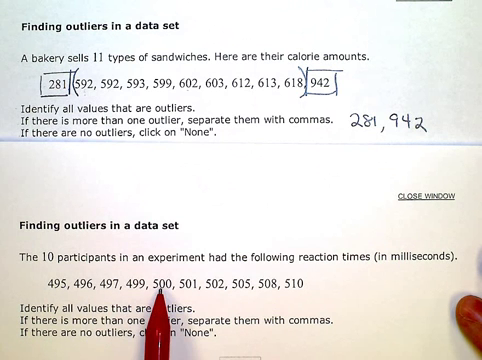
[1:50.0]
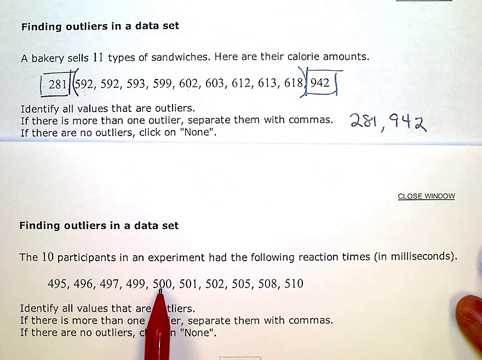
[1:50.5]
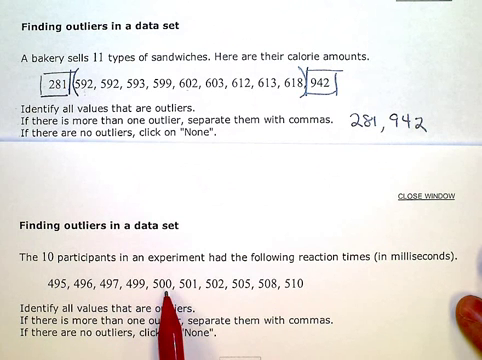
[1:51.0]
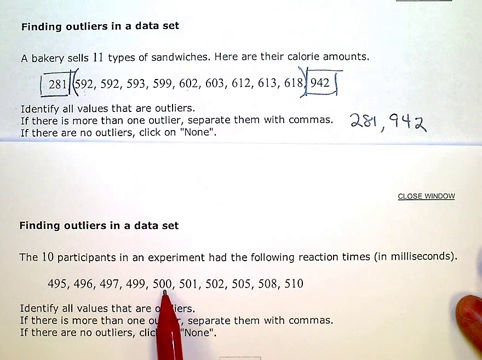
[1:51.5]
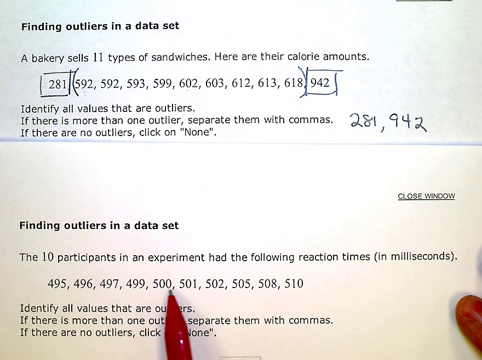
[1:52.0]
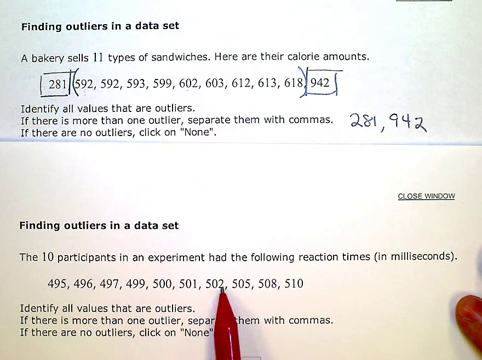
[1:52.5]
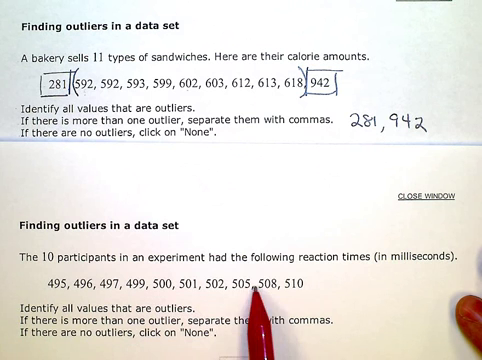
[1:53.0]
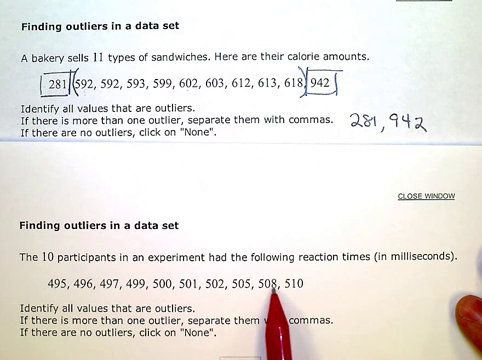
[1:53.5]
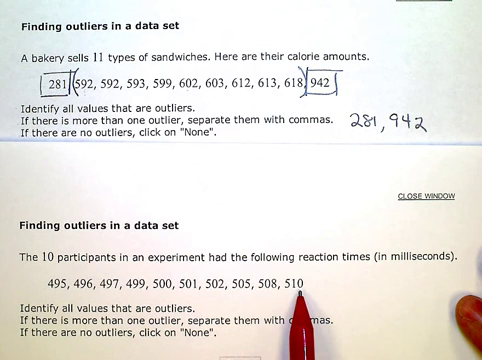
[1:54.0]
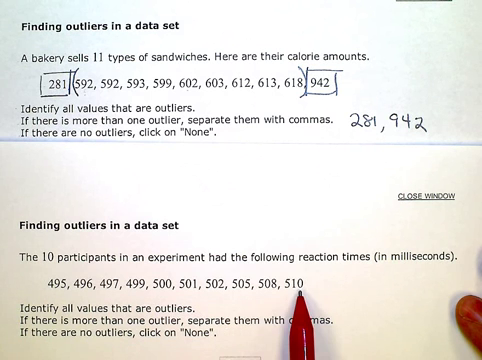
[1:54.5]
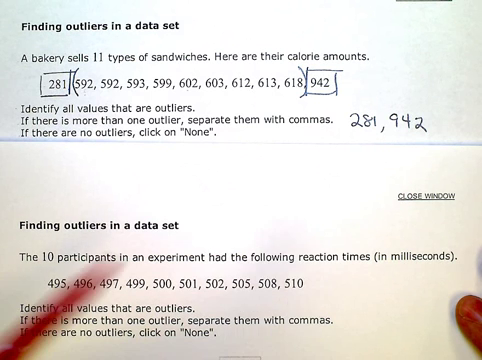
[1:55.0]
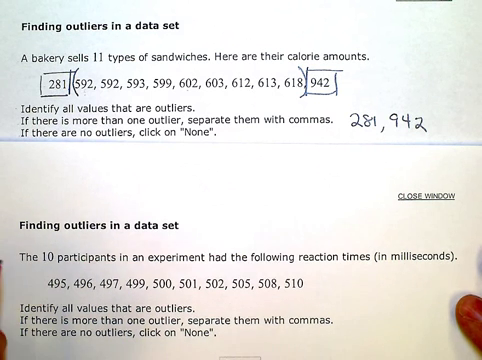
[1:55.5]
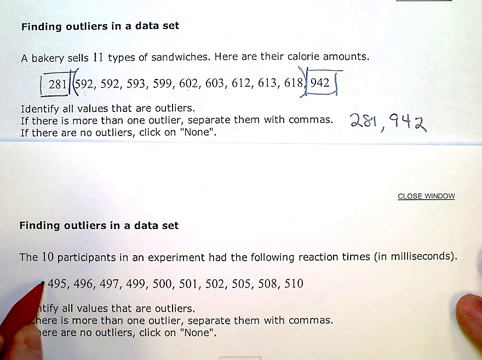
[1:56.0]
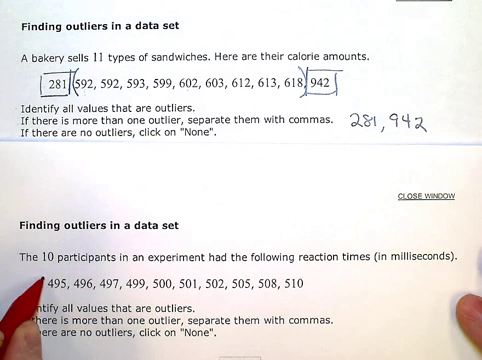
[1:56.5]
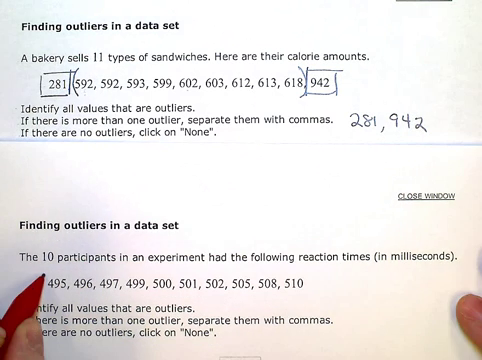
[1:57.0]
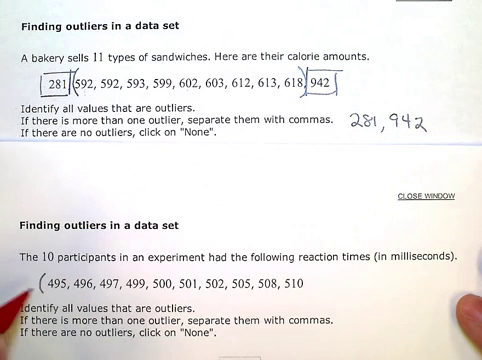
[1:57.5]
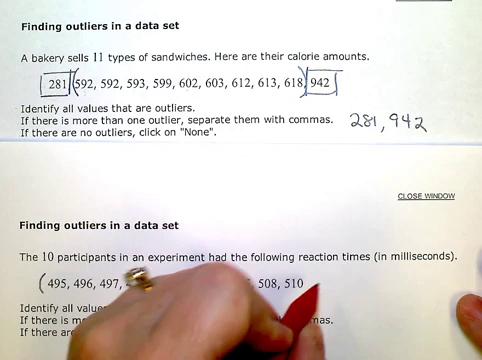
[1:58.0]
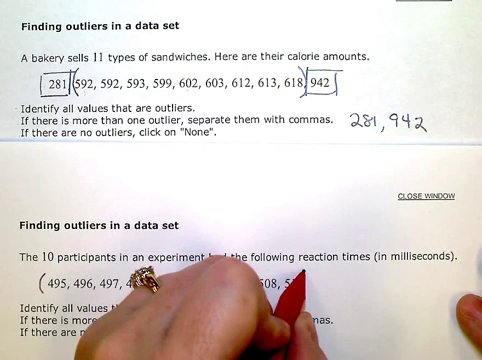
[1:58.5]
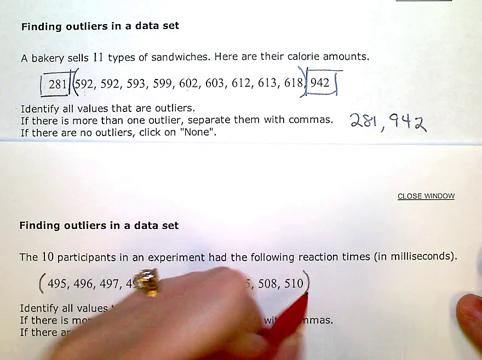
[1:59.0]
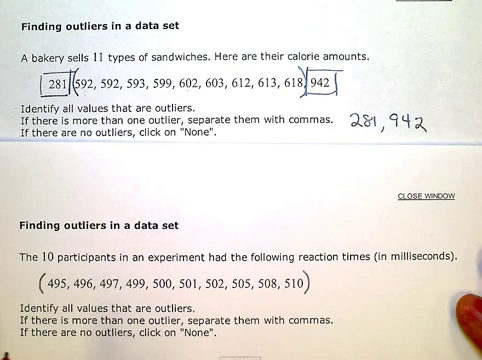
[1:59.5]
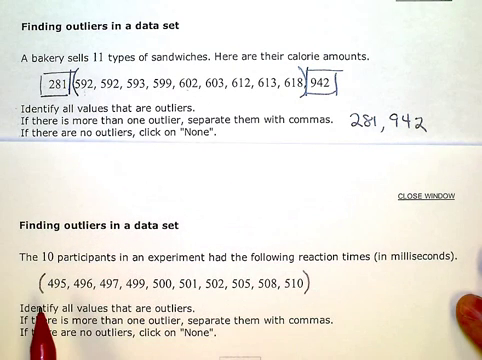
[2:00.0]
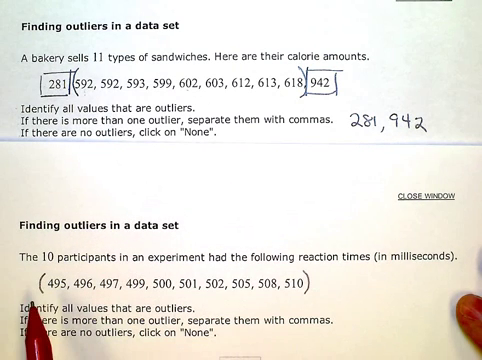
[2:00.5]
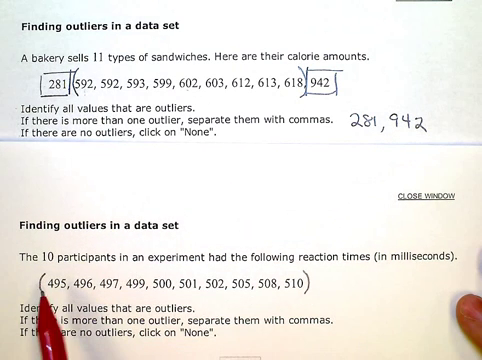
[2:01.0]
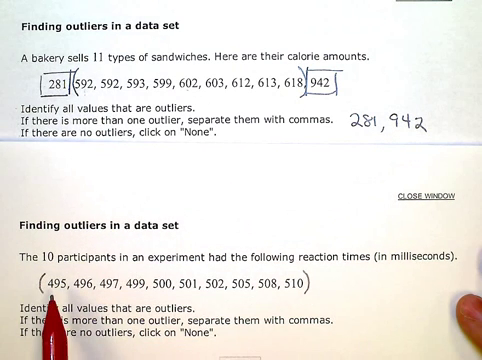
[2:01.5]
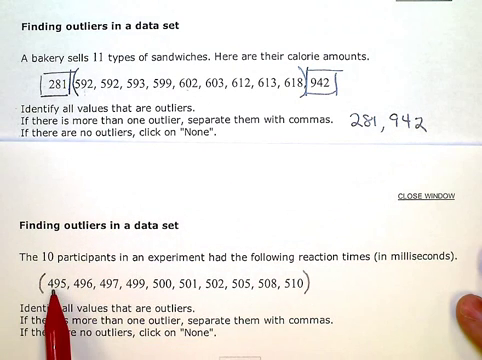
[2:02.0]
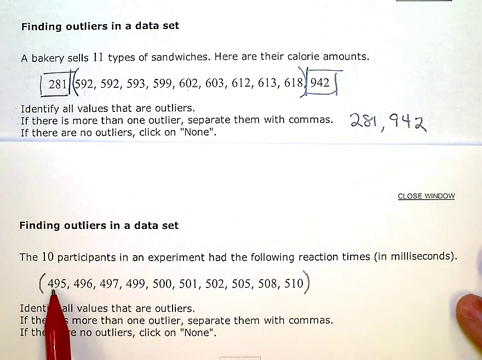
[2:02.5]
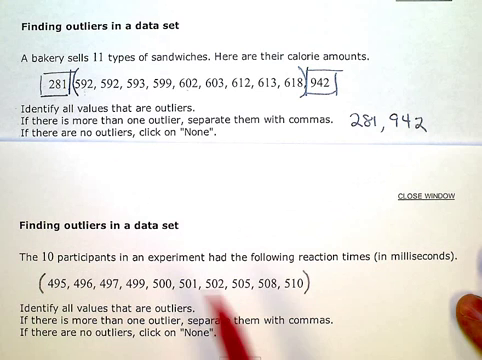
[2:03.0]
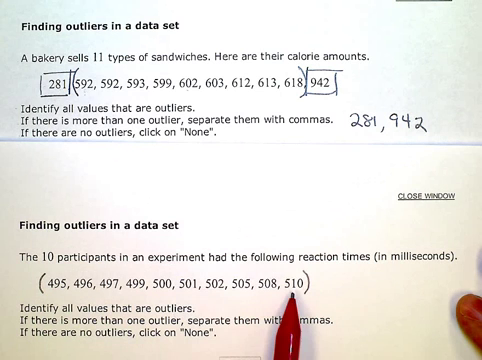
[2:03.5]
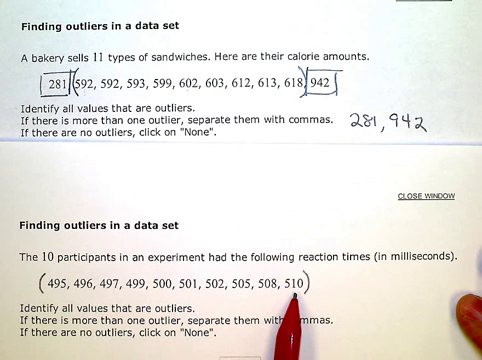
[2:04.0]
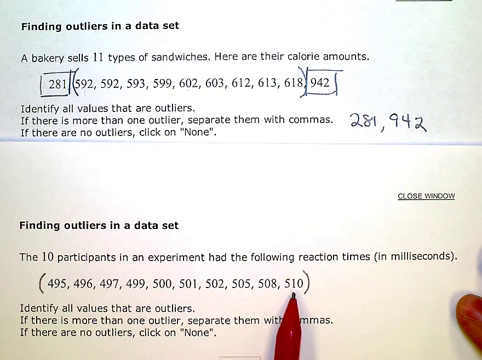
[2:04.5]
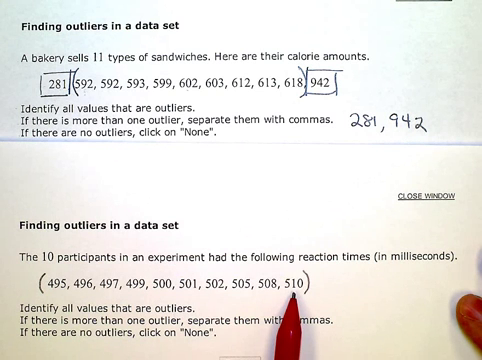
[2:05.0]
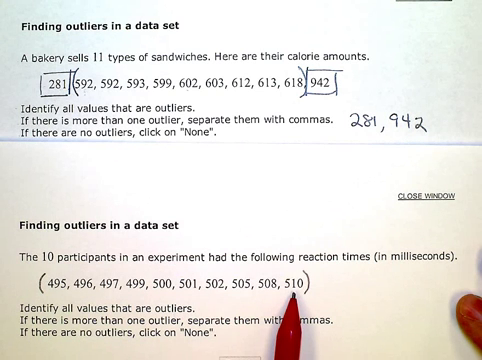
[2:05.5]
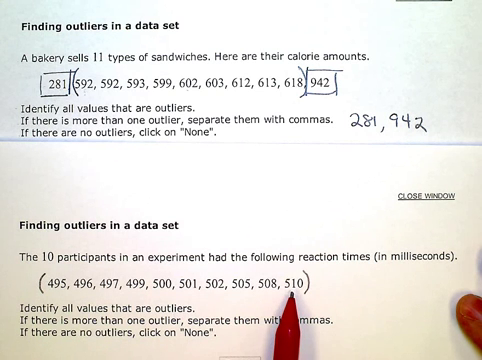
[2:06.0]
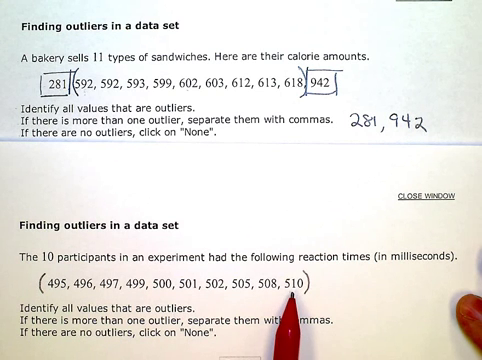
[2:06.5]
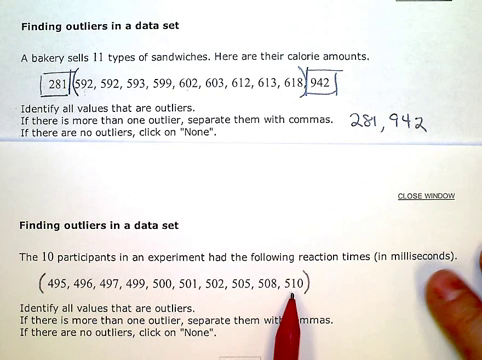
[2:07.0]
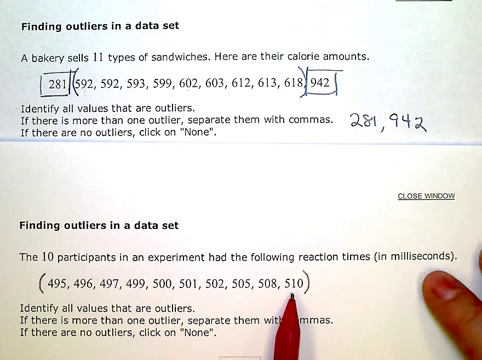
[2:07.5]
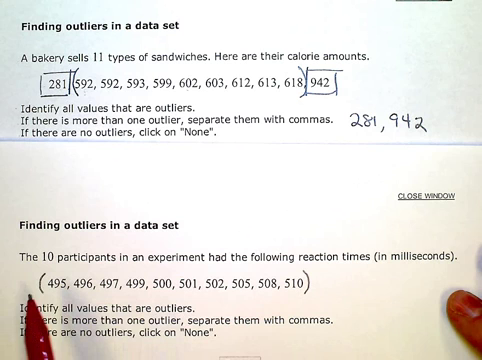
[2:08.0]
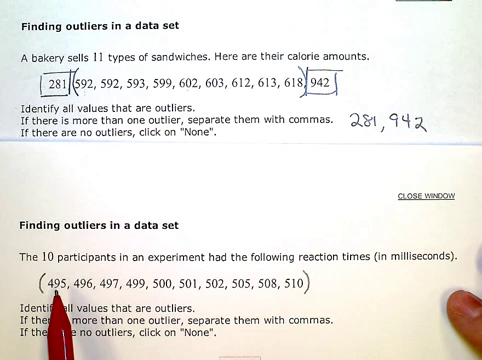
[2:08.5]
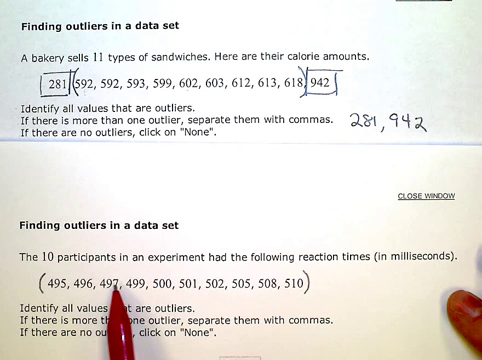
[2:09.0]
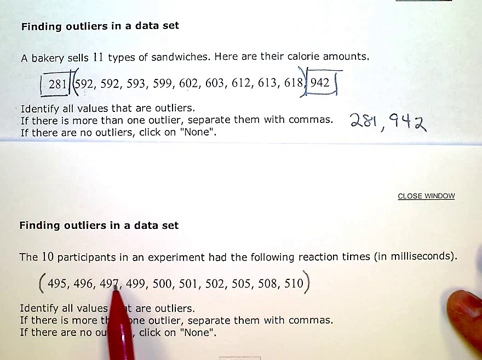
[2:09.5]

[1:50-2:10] Work continues on the second problem, with the pen used as a pointer moving across the numbers from left to right. The hand then holds the pen normally between the thumb, index and middle finger and puts brackets around the list of numbers, repeating the method used on the first question. The pen sweeps from left to right along the bottom, and an index finger of the right hand, with its nail visible, holds down the paper on the right-hand side. The hand moves across the numbers while the finger moves up to indicate the part of the question that says "in milliseconds"; the tip of the index finger, showing to about the first knuckle, is at the bottom right of the question.